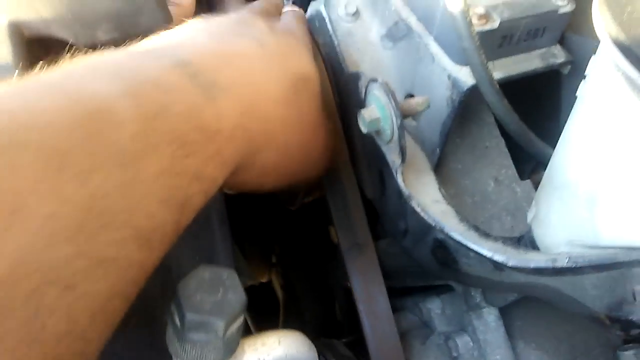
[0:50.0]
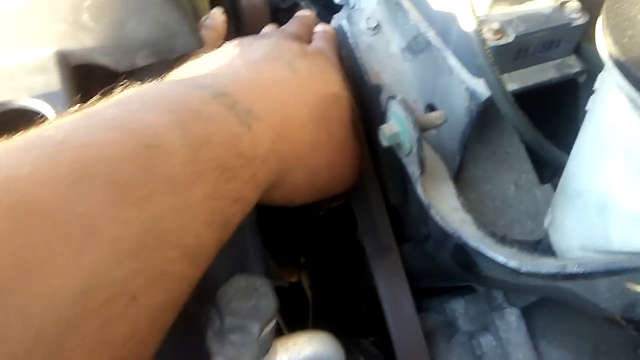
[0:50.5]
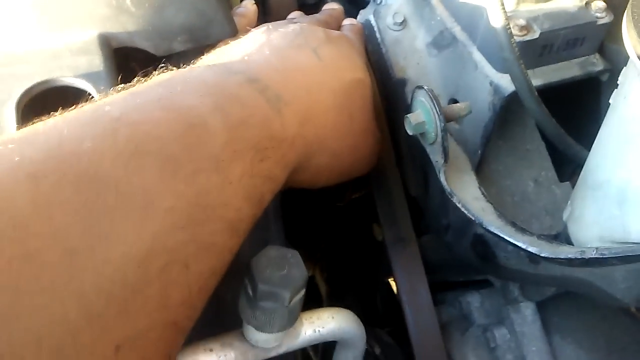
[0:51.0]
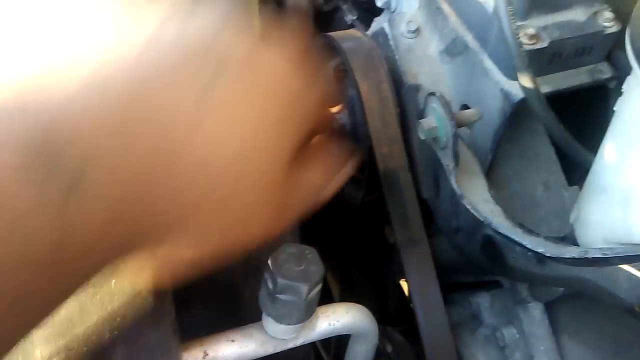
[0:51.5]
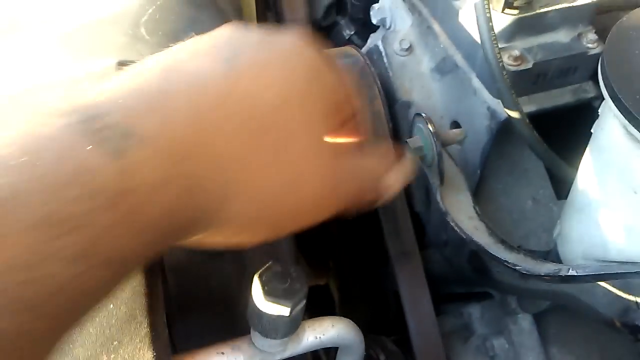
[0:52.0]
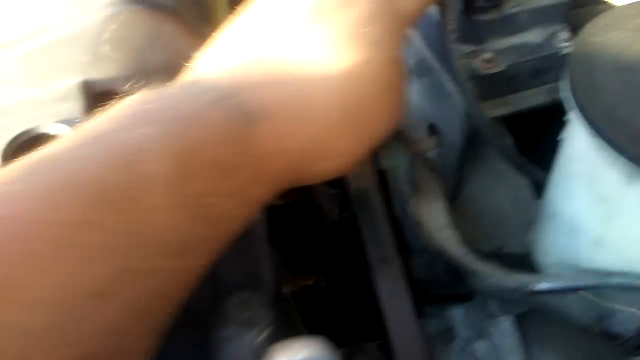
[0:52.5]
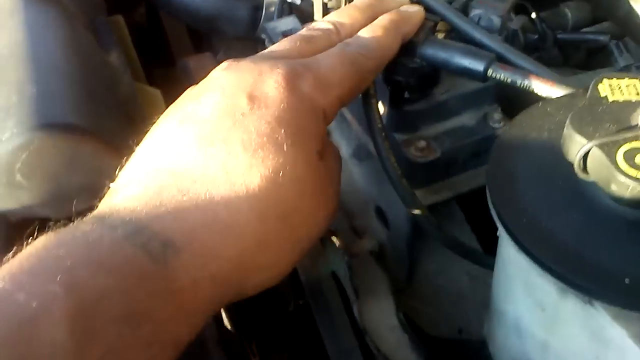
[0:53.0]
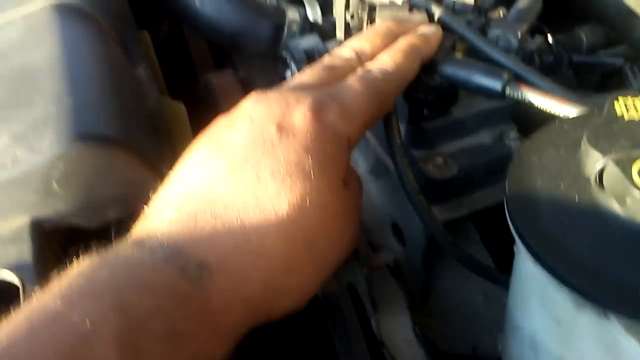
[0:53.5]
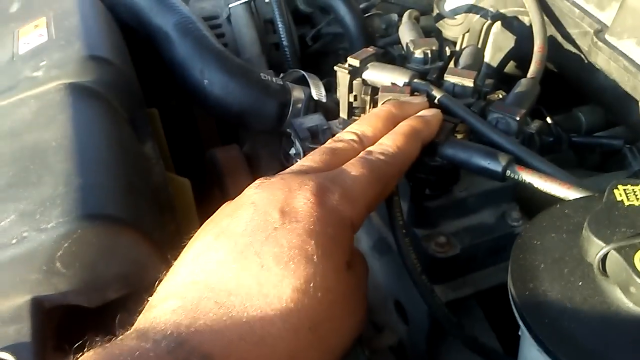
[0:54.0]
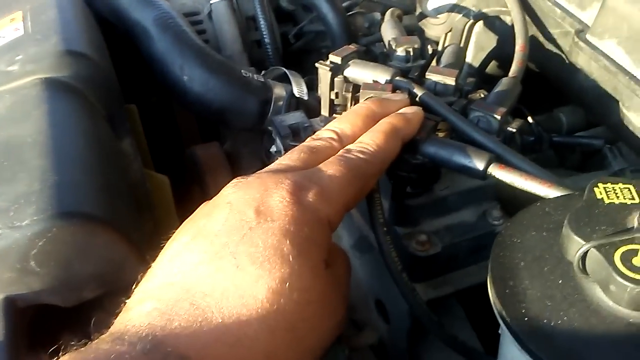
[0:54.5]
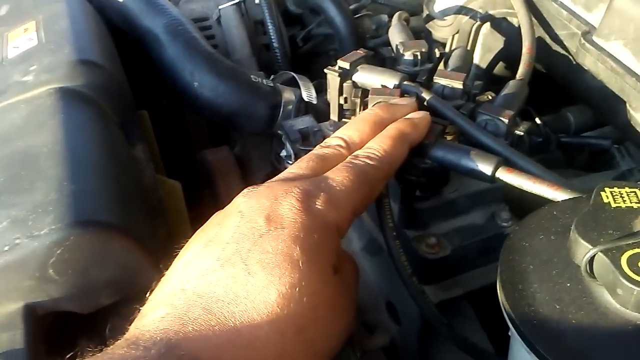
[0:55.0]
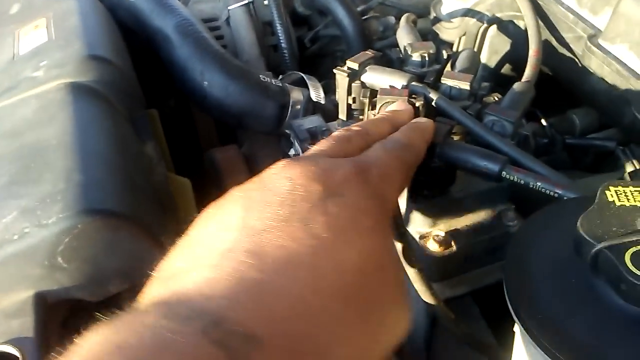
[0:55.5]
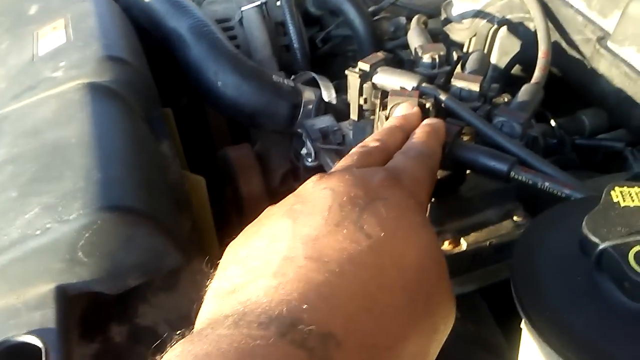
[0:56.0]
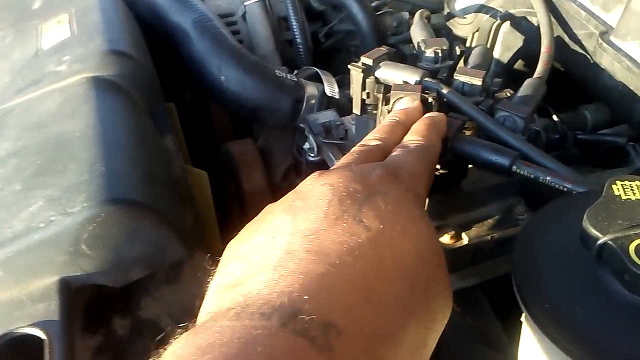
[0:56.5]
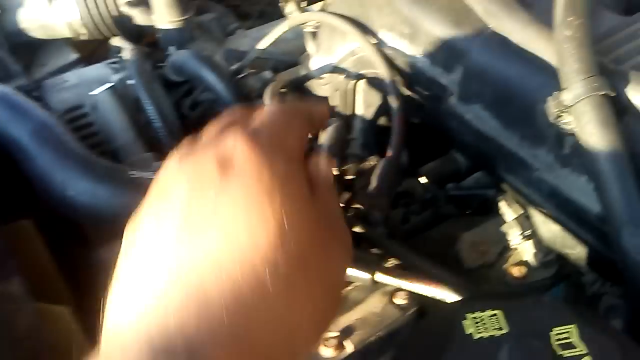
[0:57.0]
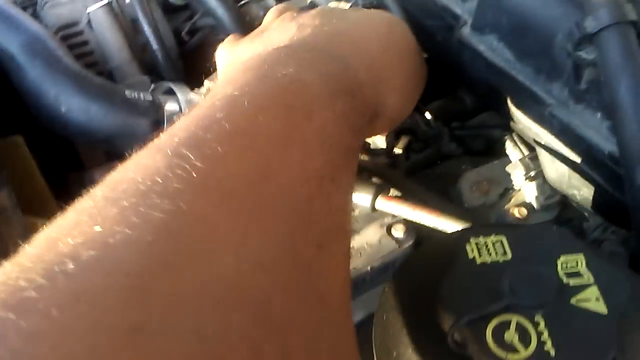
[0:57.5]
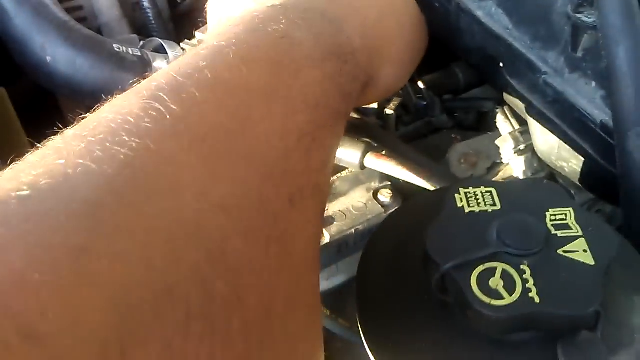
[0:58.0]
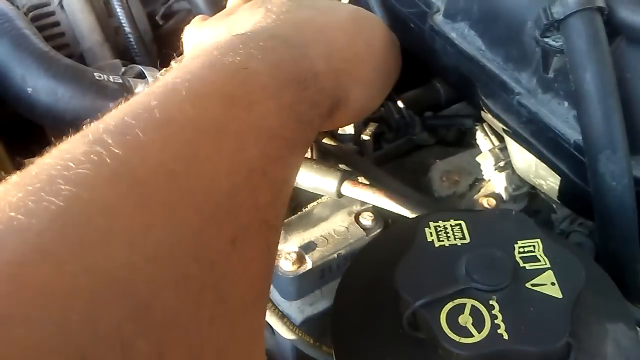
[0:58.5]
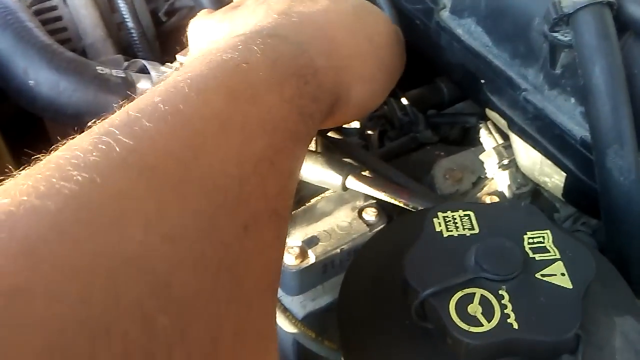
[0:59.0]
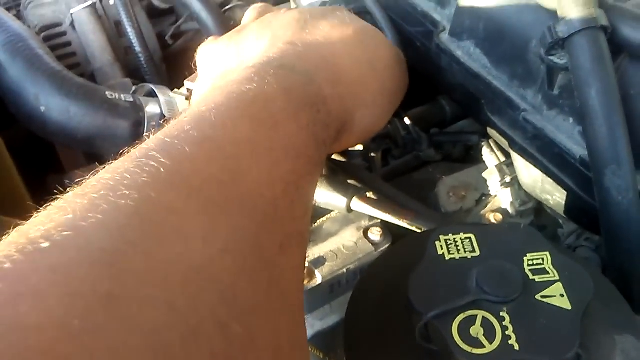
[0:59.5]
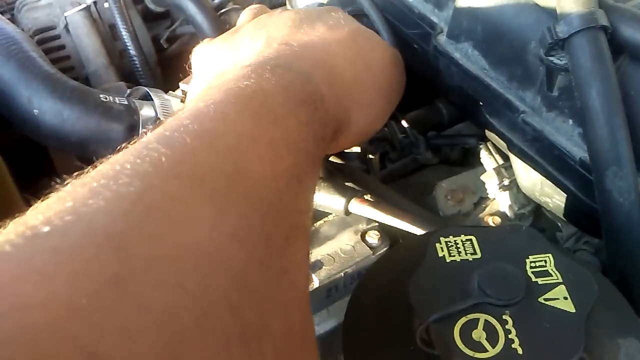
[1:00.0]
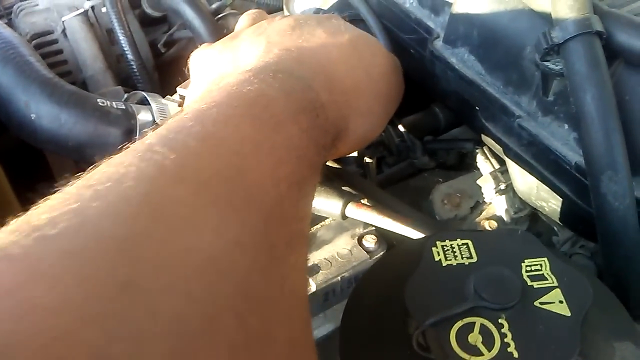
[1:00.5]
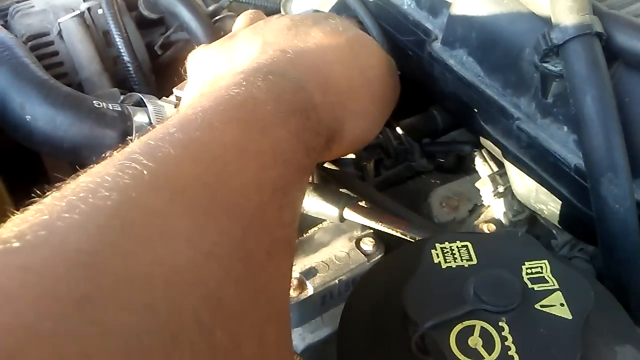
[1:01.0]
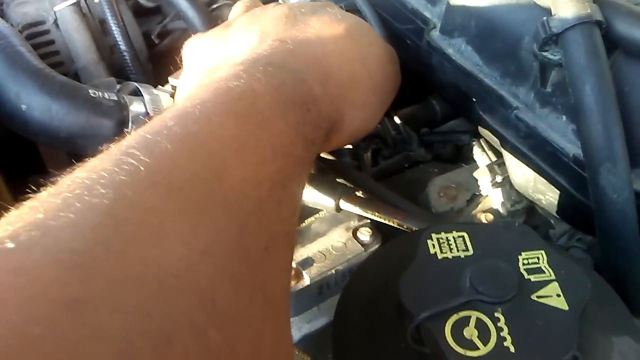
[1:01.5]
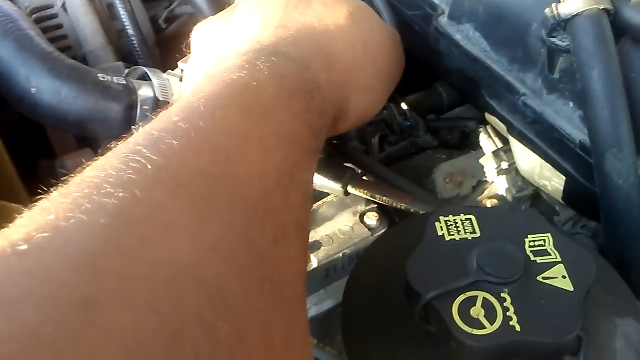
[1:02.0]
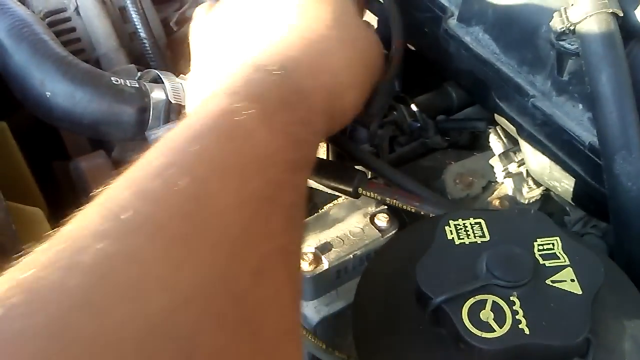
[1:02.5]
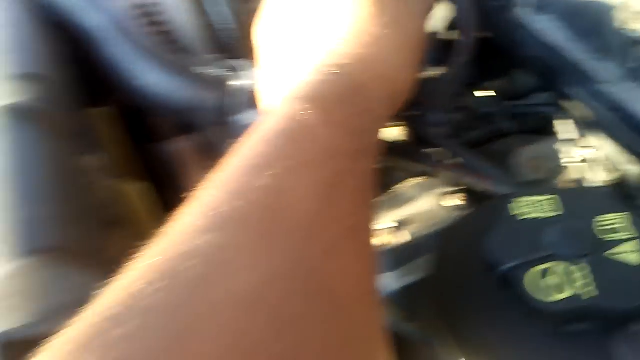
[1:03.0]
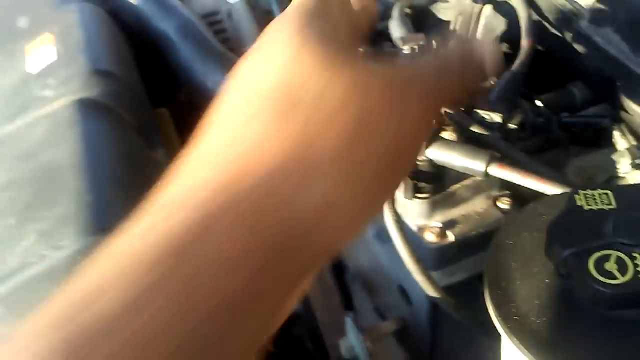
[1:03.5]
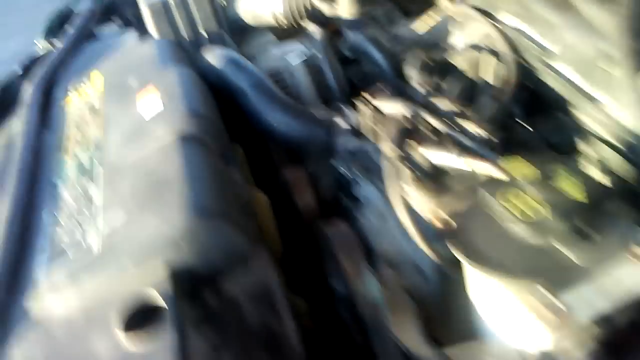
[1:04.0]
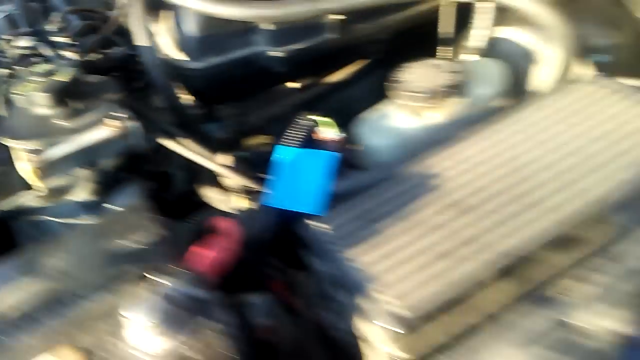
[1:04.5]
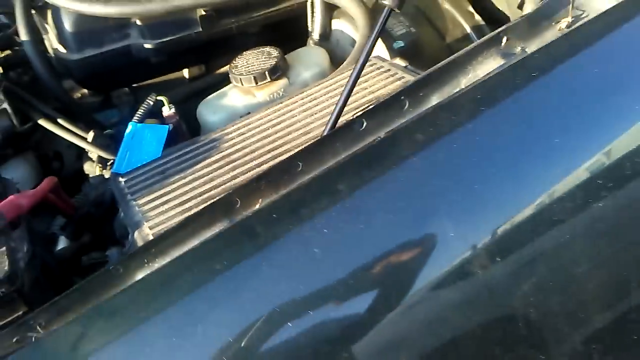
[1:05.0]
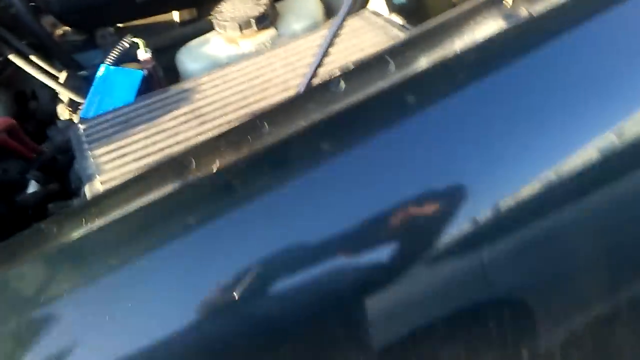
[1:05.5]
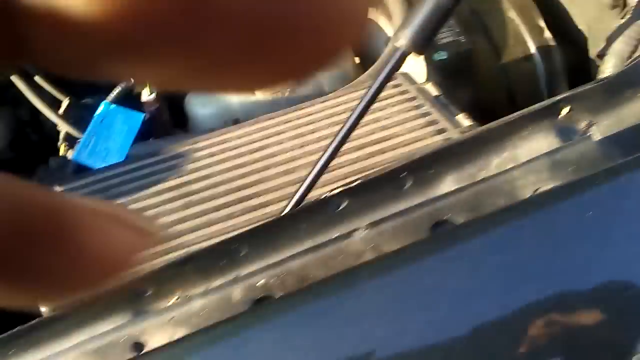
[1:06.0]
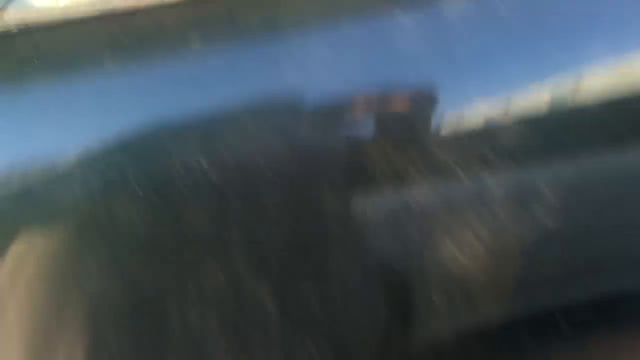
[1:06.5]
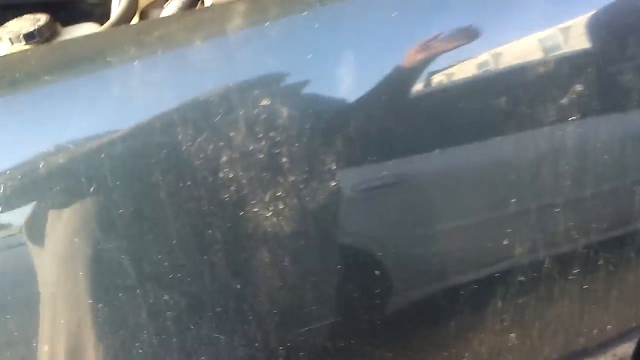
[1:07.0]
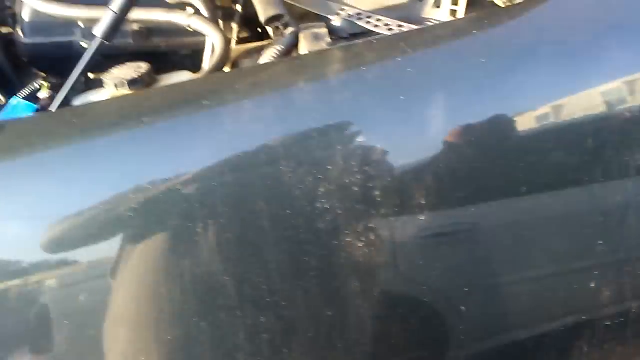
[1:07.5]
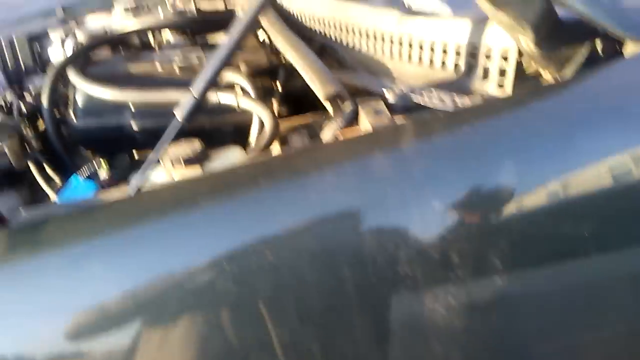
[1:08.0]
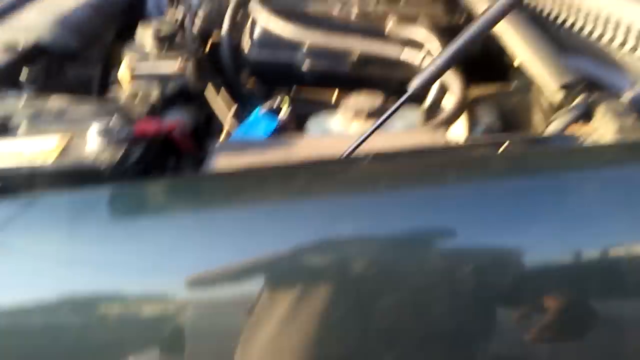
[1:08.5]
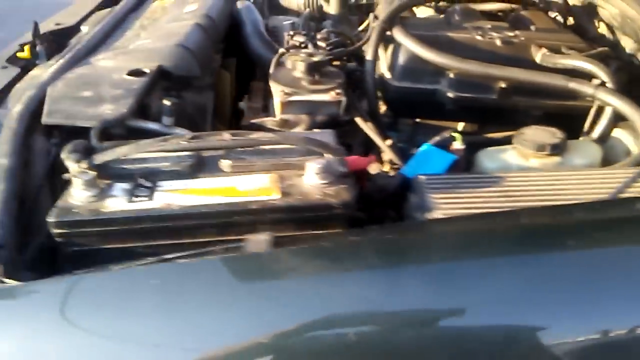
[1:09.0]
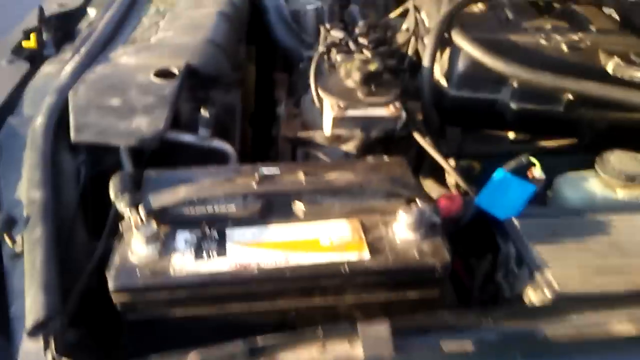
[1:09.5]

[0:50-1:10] A person's hand pats a belt within the engine compartment of a car. The person removes their hand and touches some cables in the engine compartment, where a collection of cables is plugged into one of the components. The person places their index finger and another finger on the cable heads as if feeling for something, then puts a finger into another part of the engine compartment. To the lower right is the black lid of the power steering fluid container. The camera pans outward, and a reflection of the person briefly appears on a metal part of the car's body, which is deep blue, alongside the engine compartment; the person appears to be holding a device and filming. The radiator is visible: an opaque plastic container with a black lid where the coolant goes in. The person's reflection continues to show on the side of the car beside the open engine compartment, apparently with a hand held up holding a cell phone while filming.